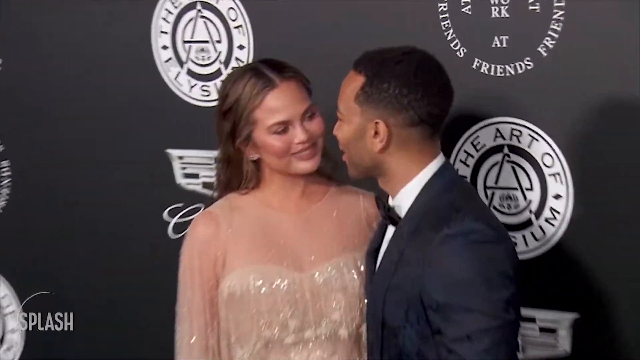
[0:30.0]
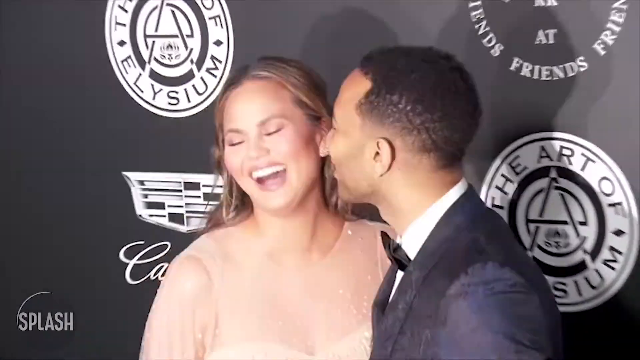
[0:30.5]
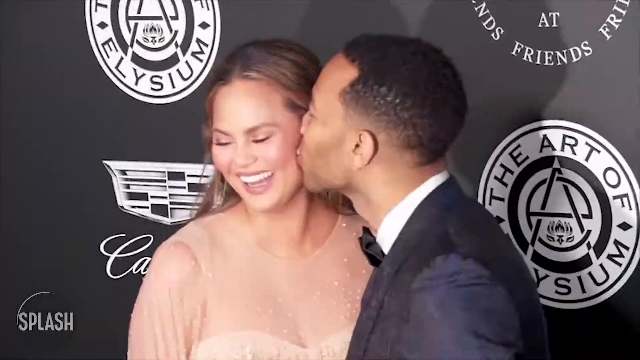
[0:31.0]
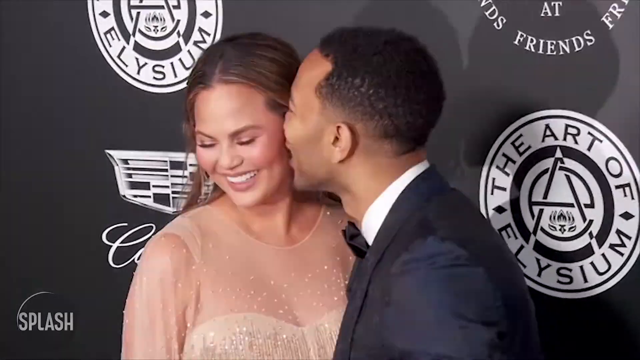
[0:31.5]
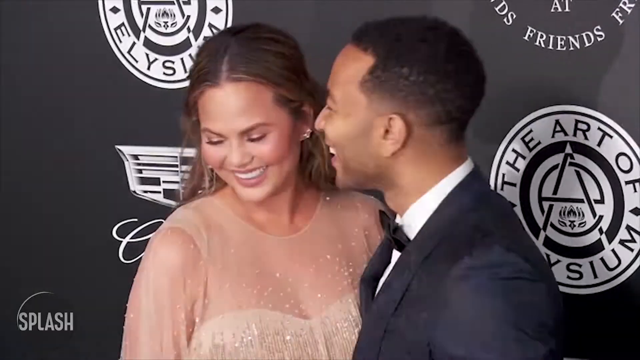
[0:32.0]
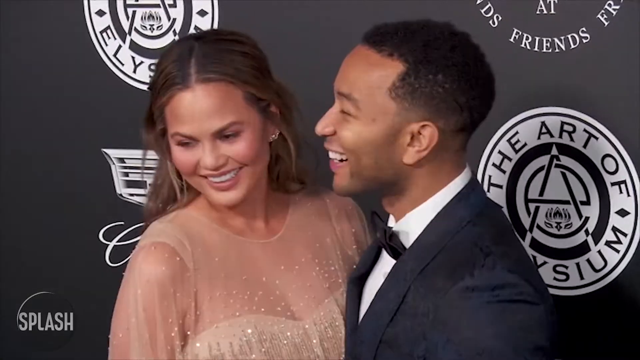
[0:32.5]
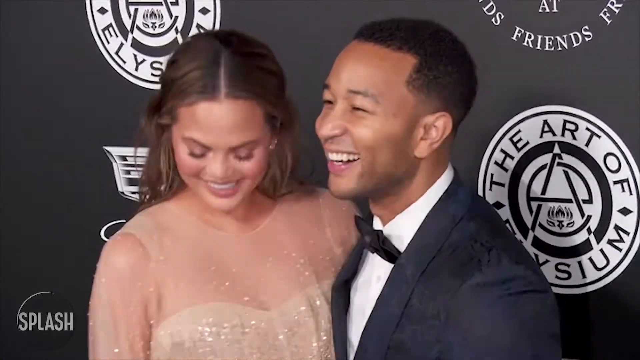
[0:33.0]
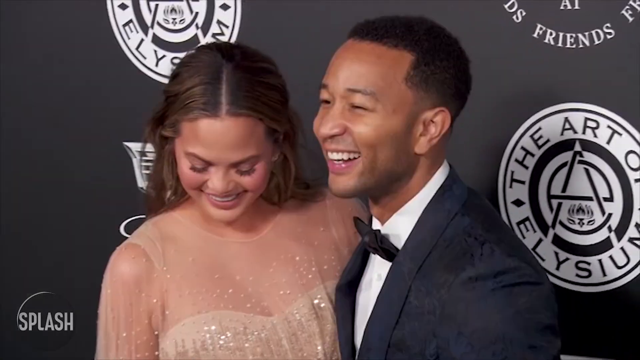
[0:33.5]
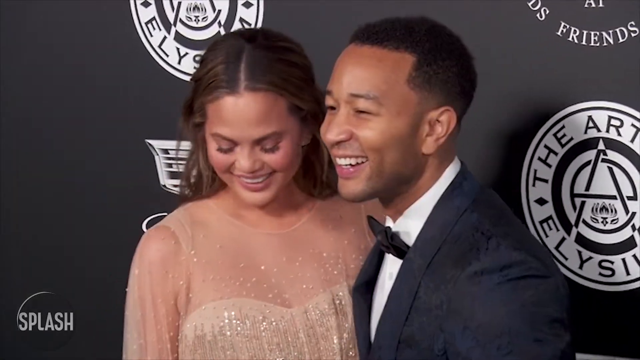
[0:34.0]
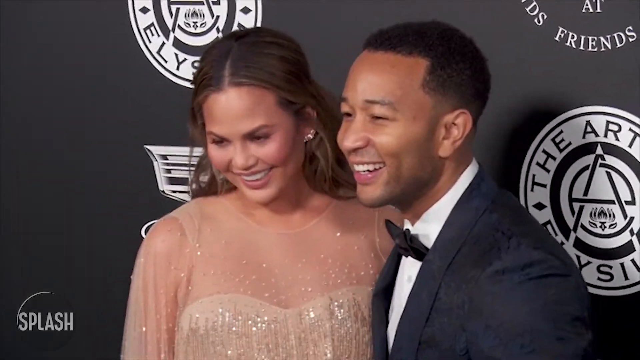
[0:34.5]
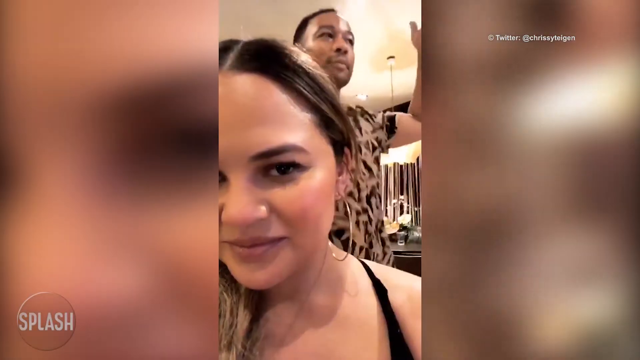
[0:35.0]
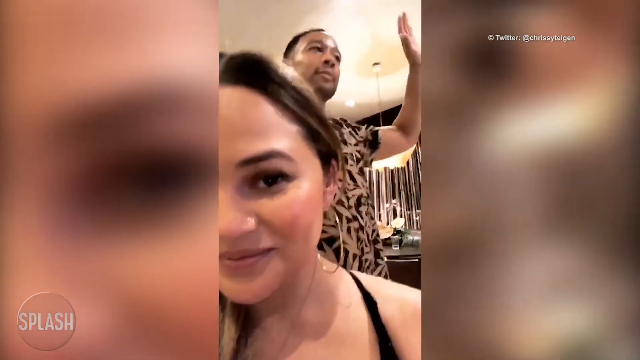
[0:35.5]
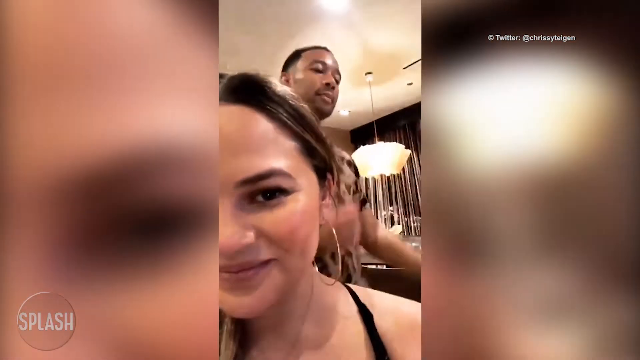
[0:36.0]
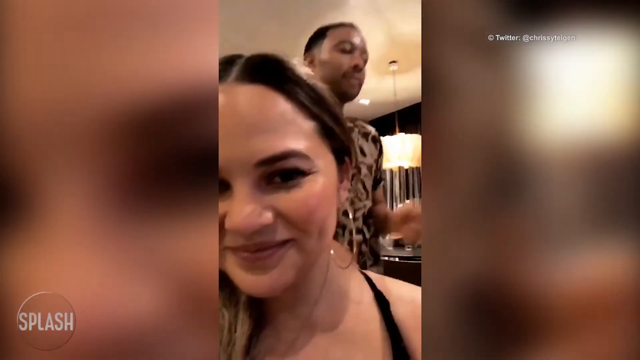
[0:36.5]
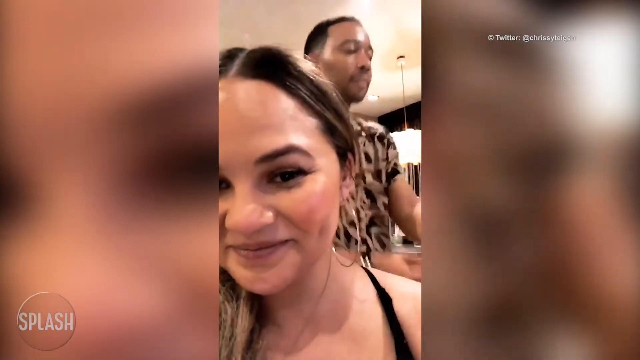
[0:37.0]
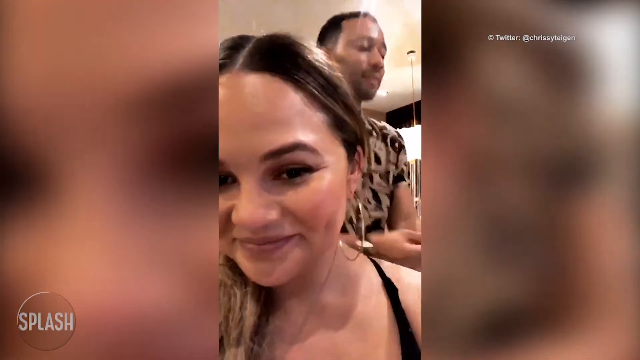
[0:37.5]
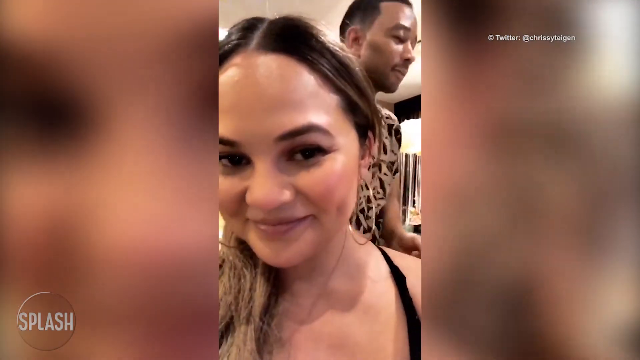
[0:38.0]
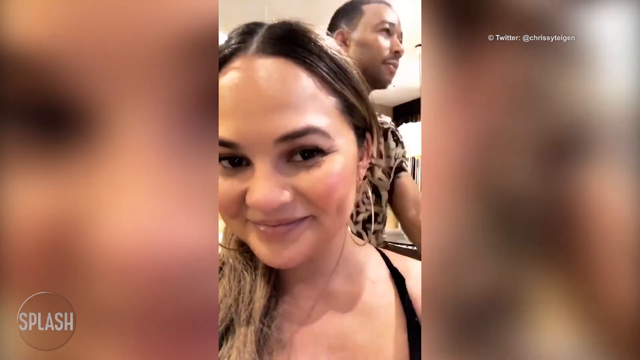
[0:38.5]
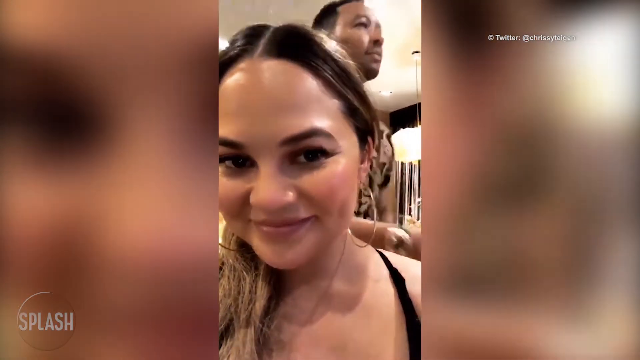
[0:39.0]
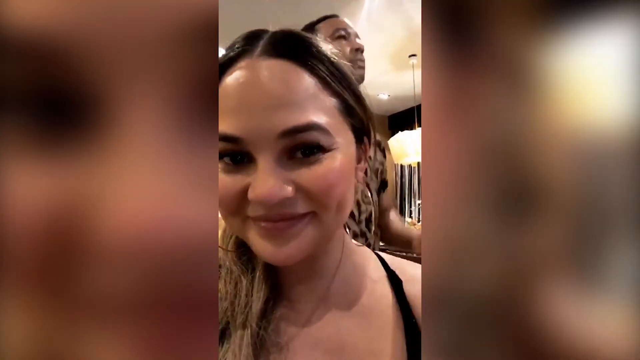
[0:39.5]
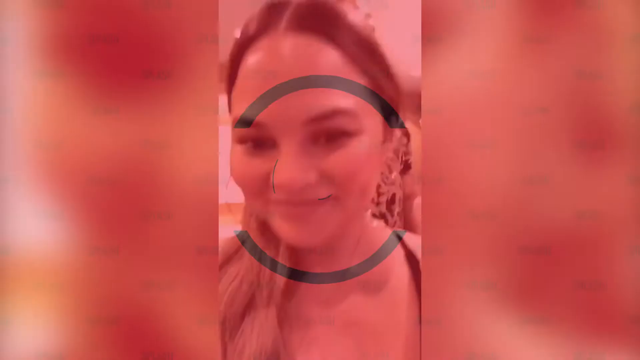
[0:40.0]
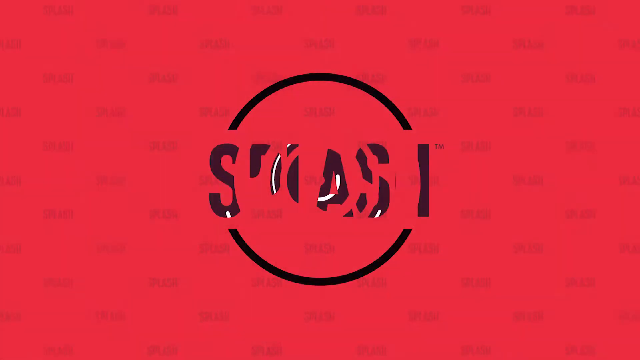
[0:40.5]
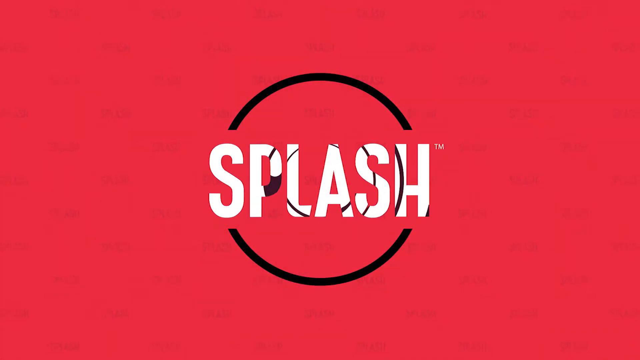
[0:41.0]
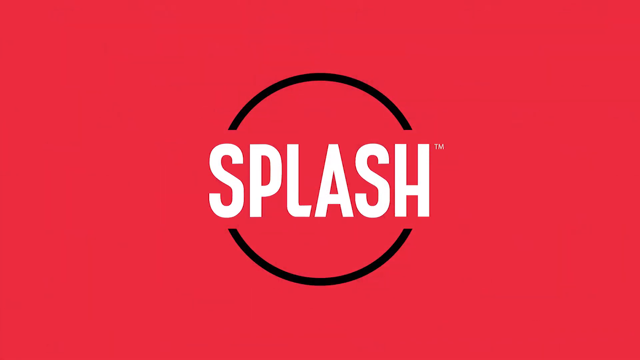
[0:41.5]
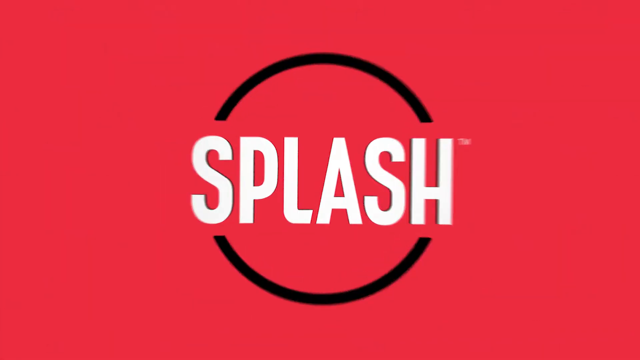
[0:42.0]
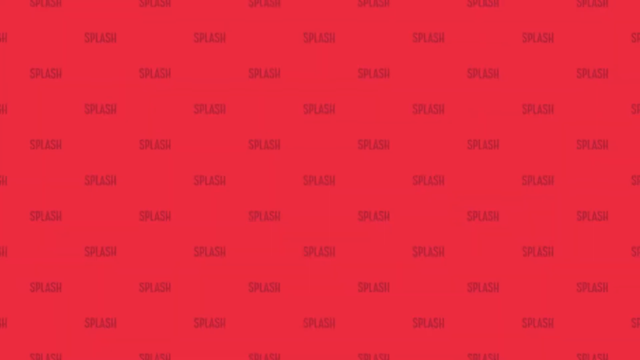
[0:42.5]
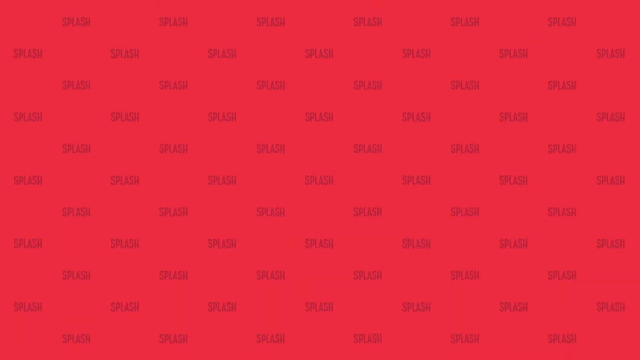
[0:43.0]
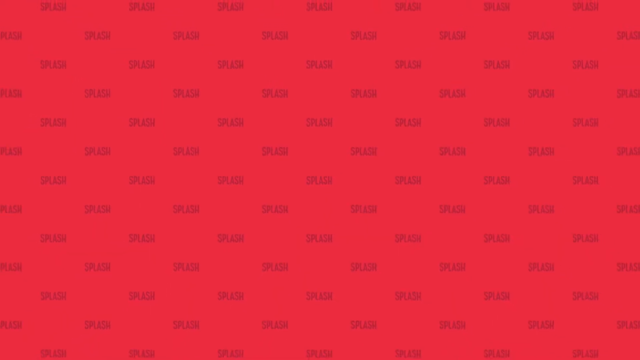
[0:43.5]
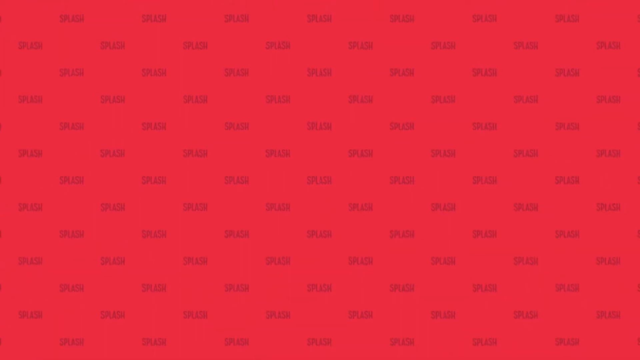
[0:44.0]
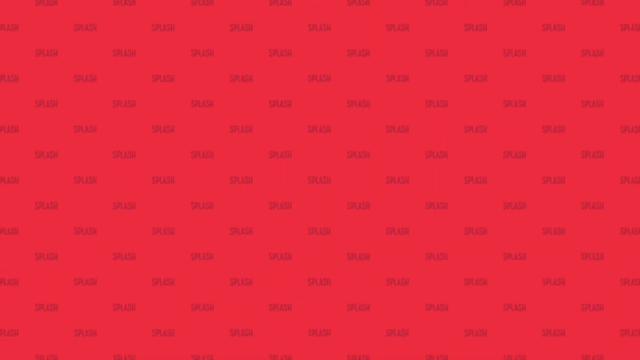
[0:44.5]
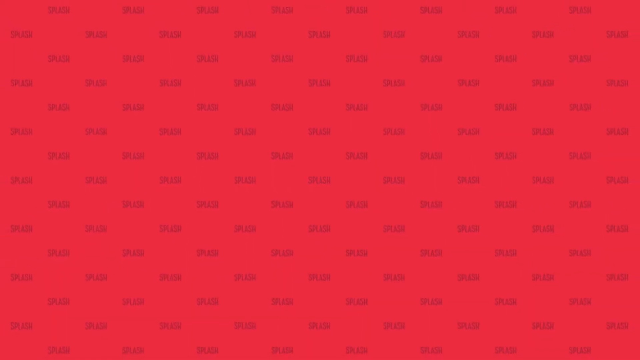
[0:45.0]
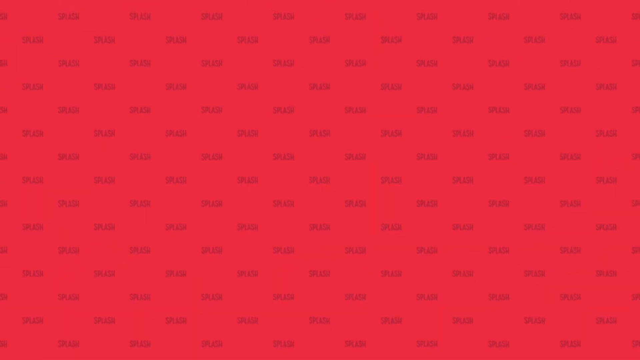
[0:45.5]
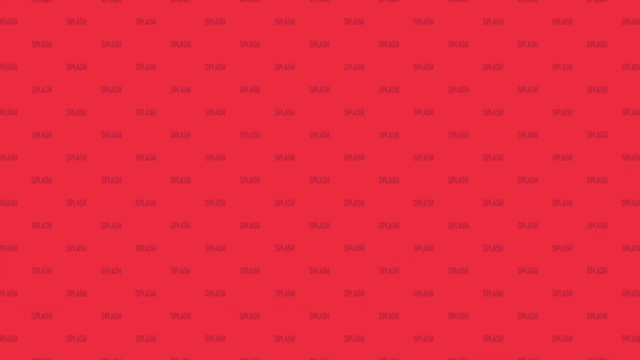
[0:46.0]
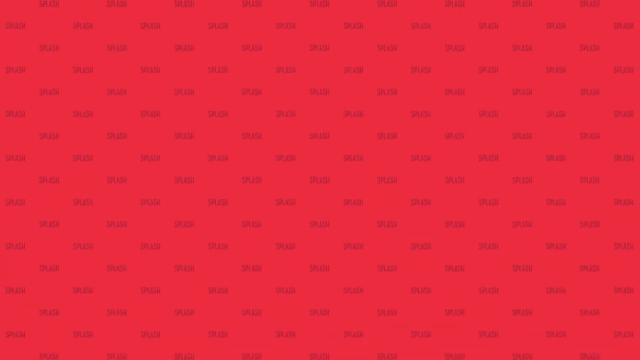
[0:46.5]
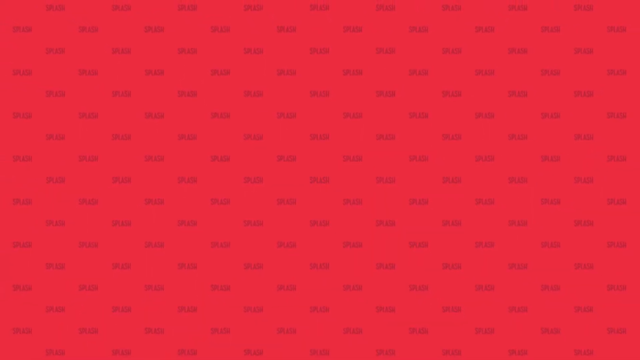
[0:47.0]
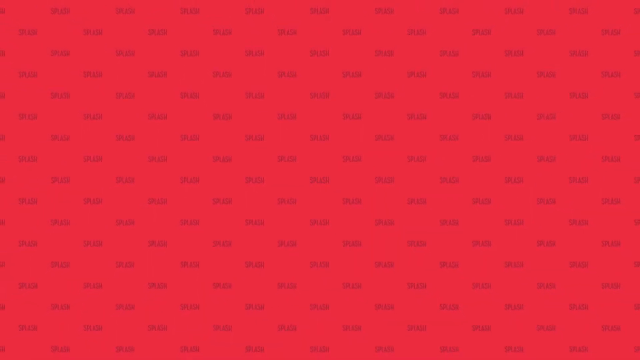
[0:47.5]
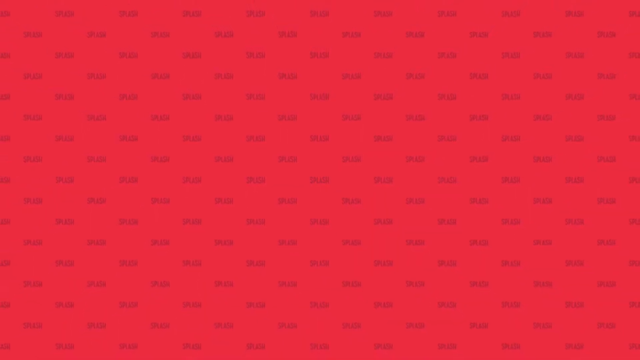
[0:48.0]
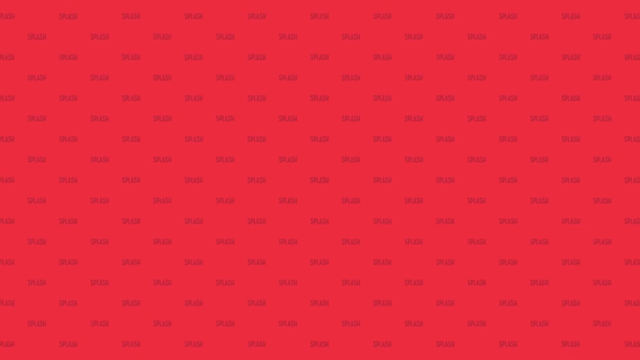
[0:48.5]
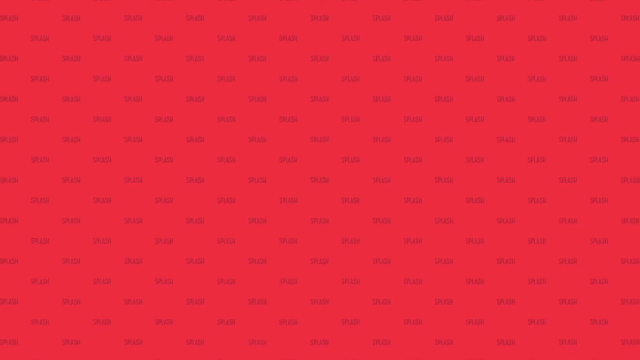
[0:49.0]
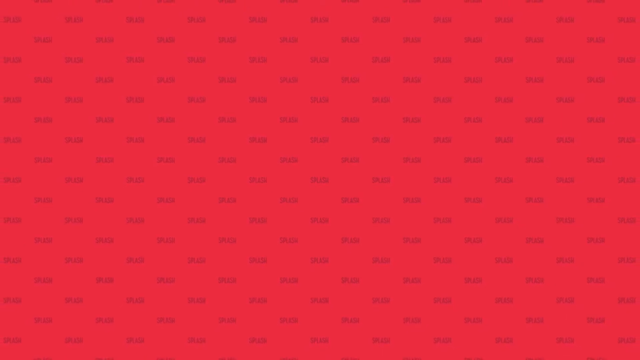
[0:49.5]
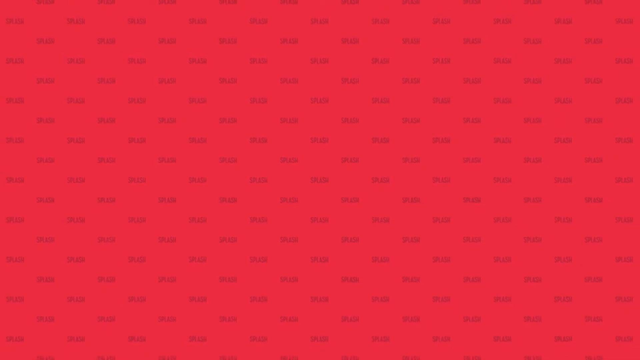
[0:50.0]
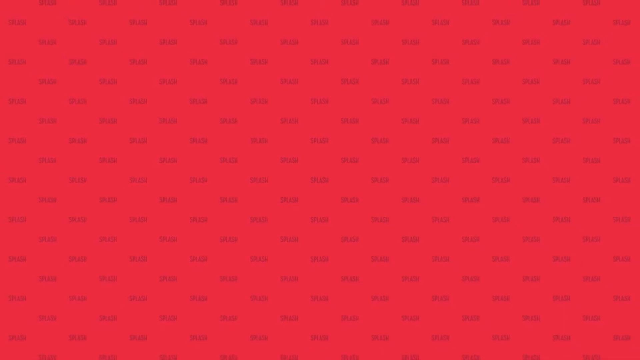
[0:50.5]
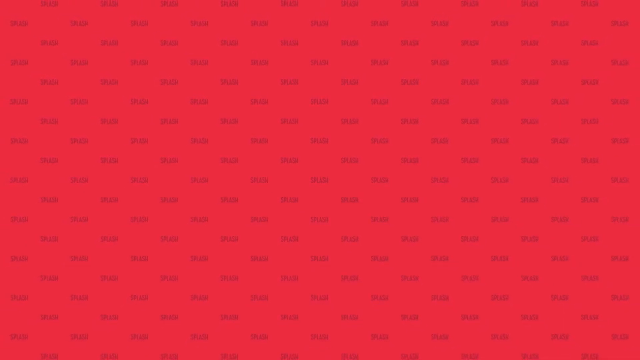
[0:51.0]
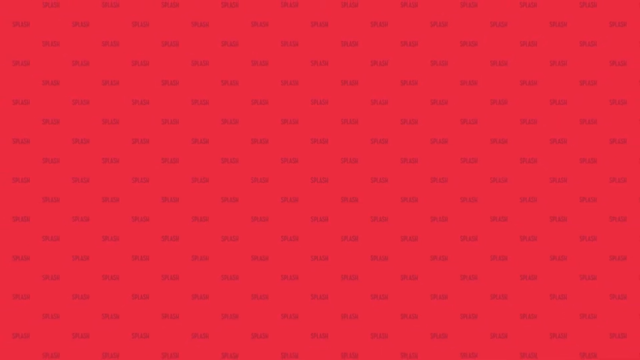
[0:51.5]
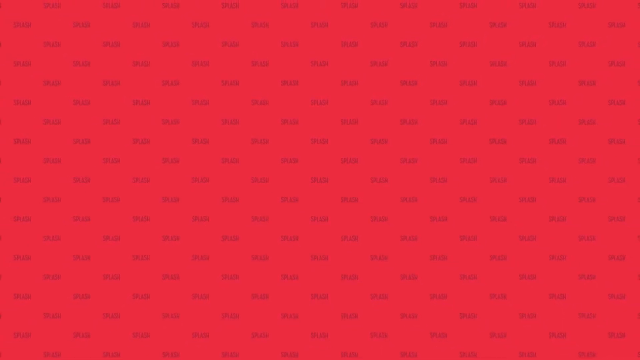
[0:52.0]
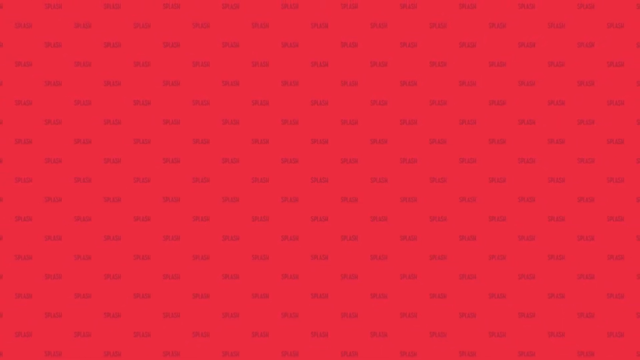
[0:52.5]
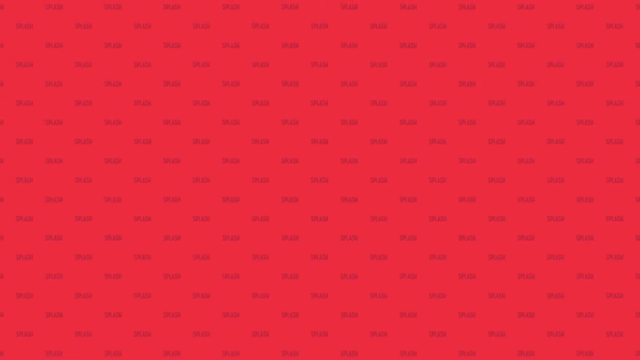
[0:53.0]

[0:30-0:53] John Legend and Chrissy Teigen are in front of the Cadillac banner at the Oscars, posing together, laughing, hugging and kissing, and they look like they are having a very good time. The video then shows footage of them at their house or somewhere else: she records a close-up selfie video while he dances behind her in what looks like a leopard shirt or a brown and black design shirt, and she smiles and laughs, presumably at him. Next comes a banner with a red background and the word "splash" in white writing. The splash comes forward, revealing a red background with small black splash logos on it, and the video ends.